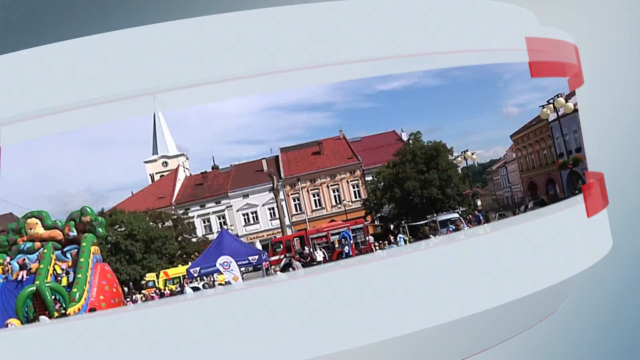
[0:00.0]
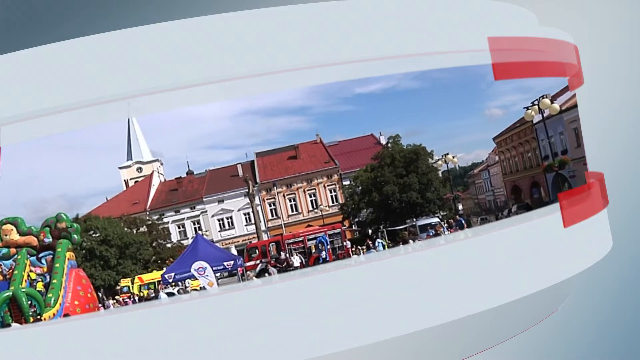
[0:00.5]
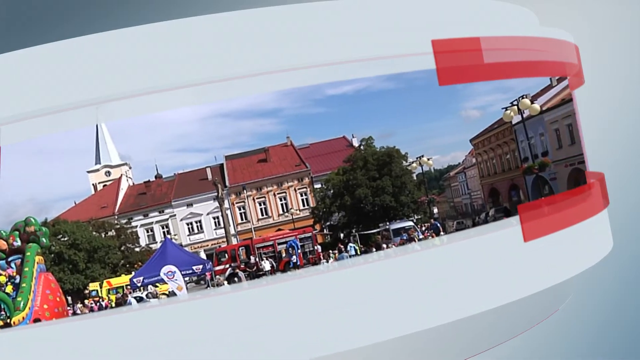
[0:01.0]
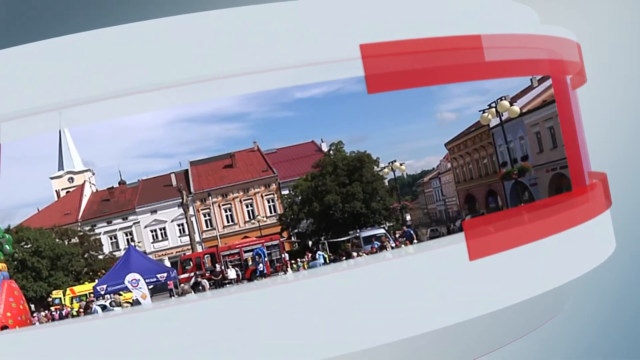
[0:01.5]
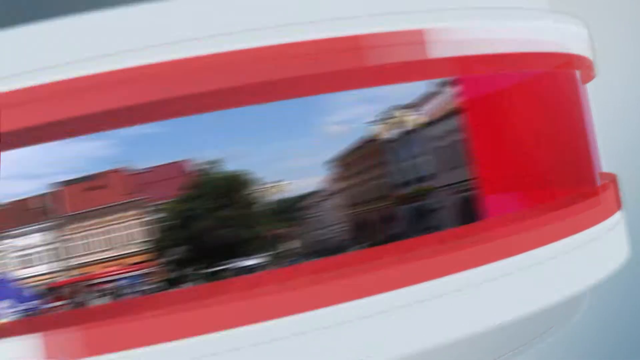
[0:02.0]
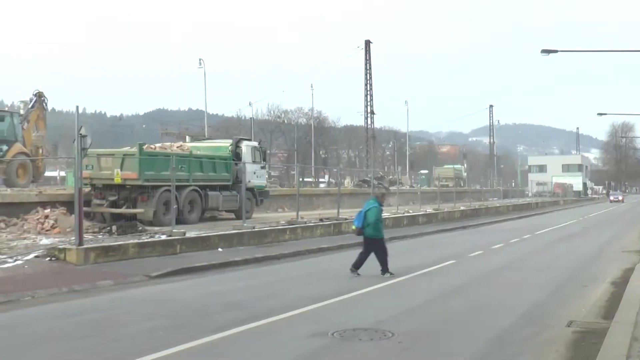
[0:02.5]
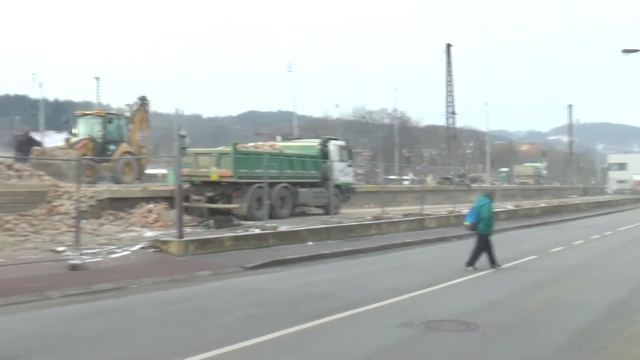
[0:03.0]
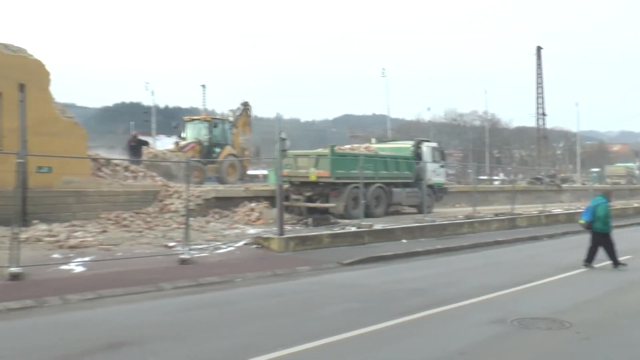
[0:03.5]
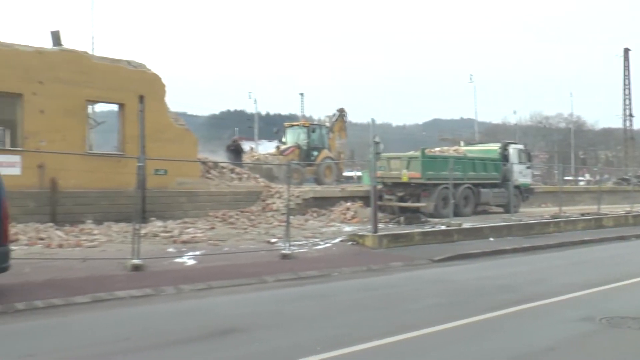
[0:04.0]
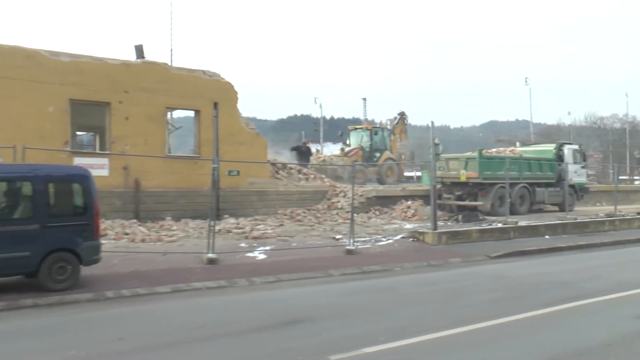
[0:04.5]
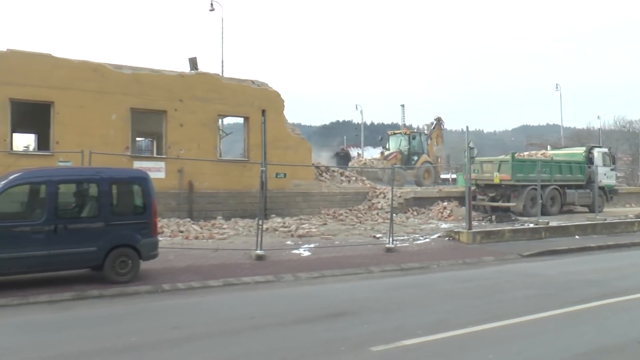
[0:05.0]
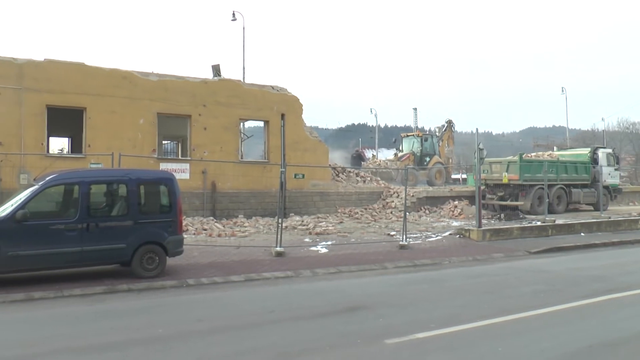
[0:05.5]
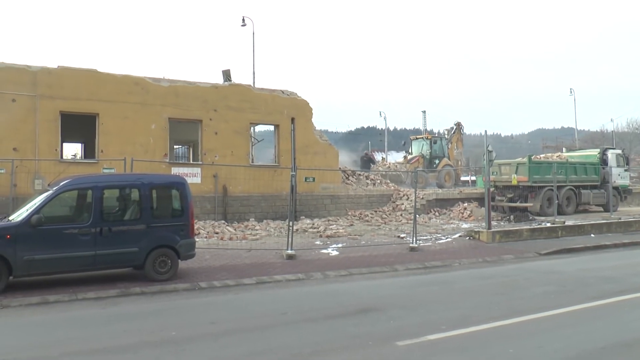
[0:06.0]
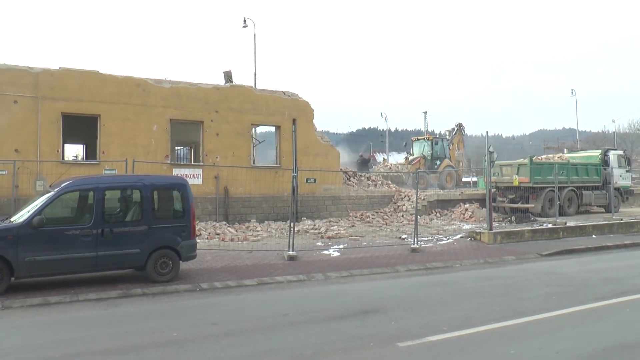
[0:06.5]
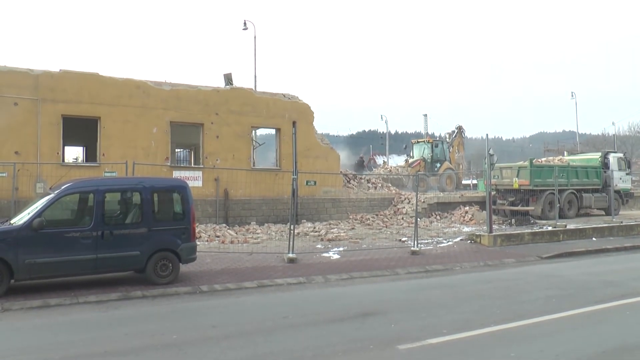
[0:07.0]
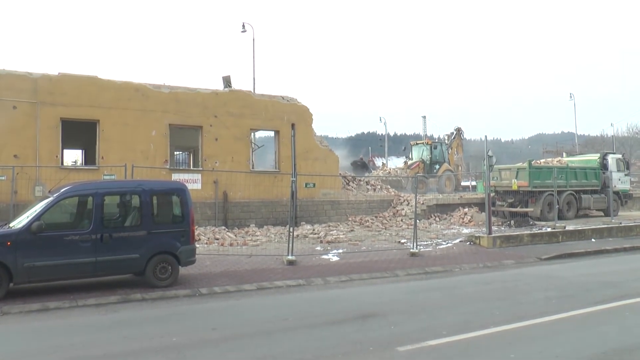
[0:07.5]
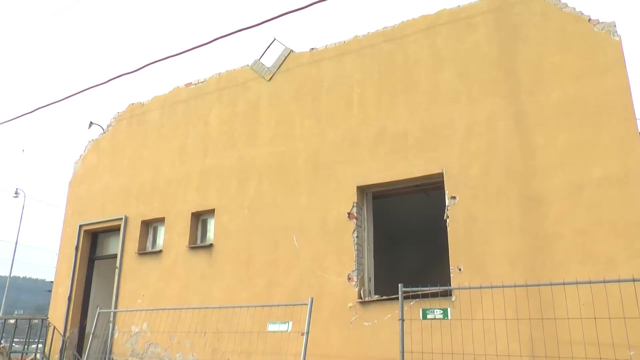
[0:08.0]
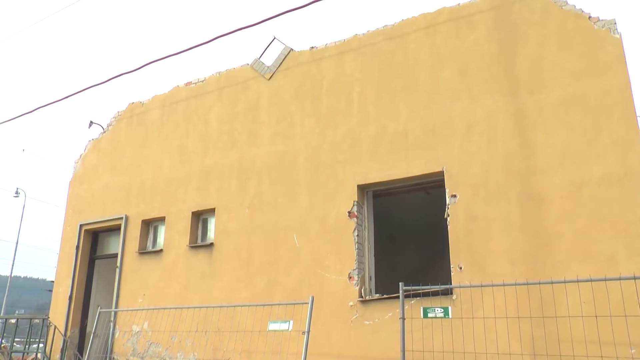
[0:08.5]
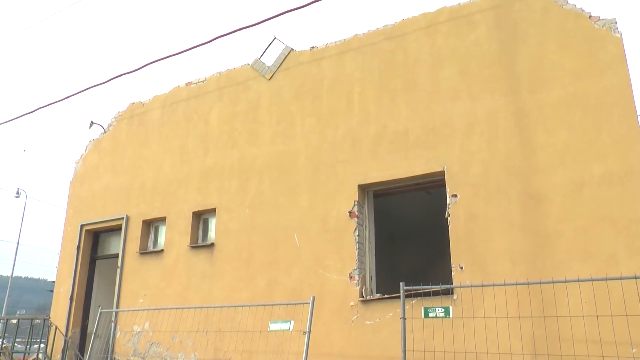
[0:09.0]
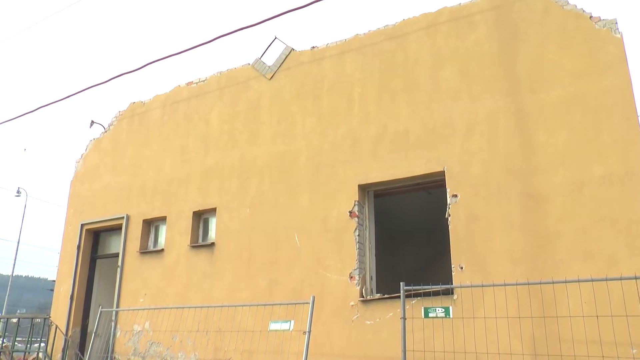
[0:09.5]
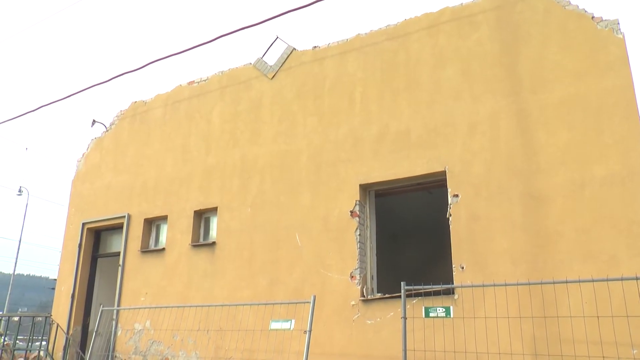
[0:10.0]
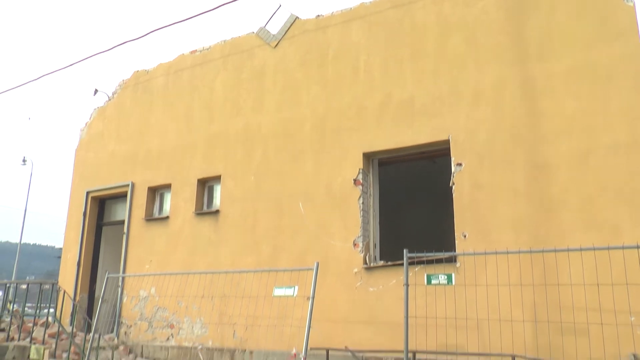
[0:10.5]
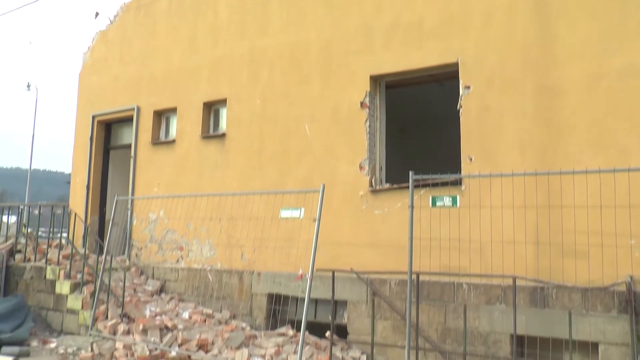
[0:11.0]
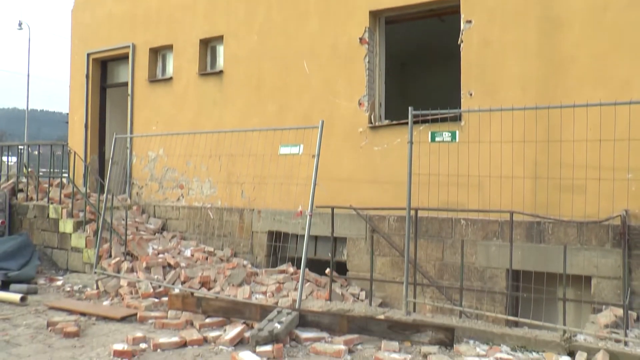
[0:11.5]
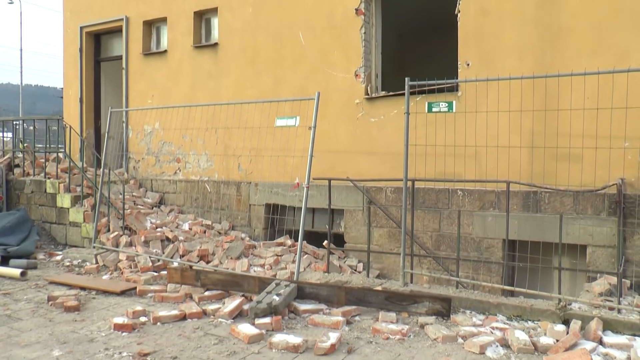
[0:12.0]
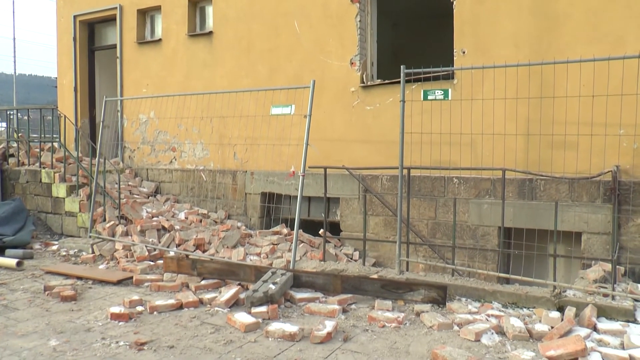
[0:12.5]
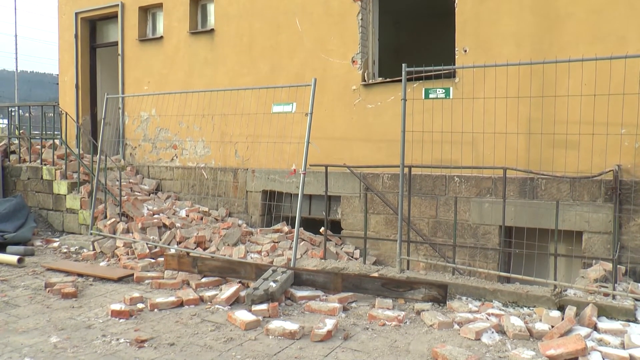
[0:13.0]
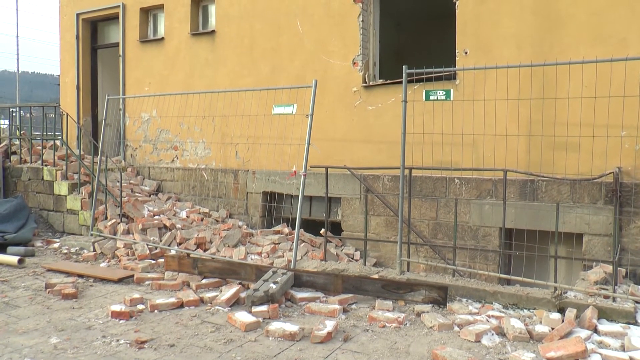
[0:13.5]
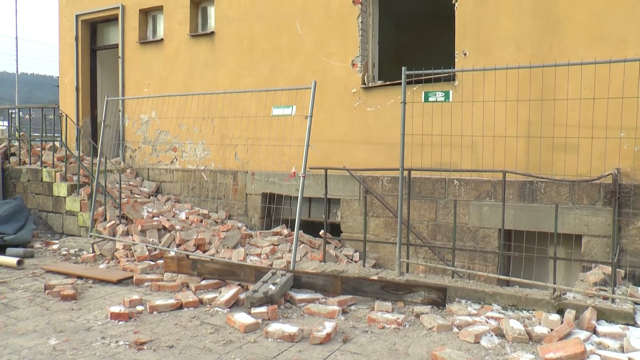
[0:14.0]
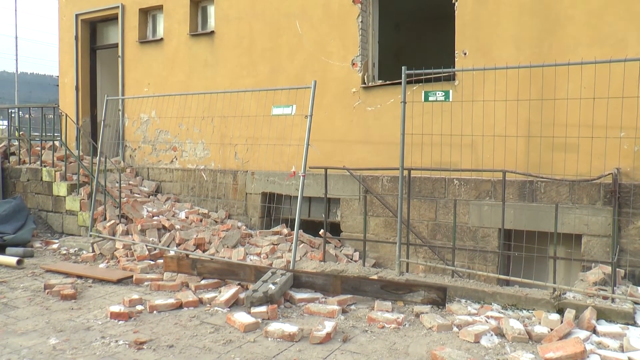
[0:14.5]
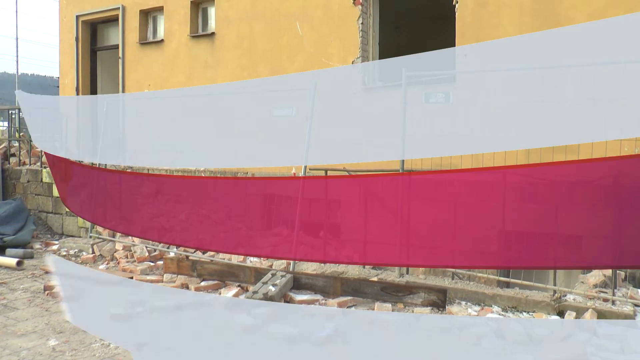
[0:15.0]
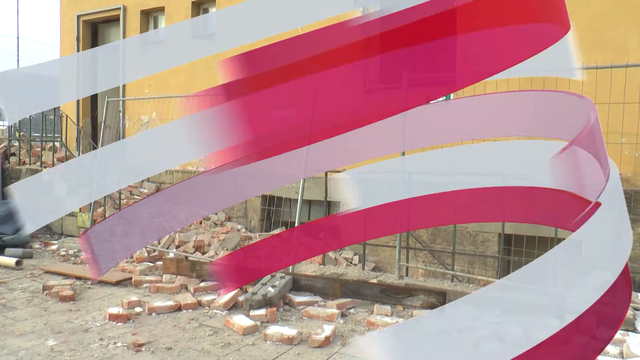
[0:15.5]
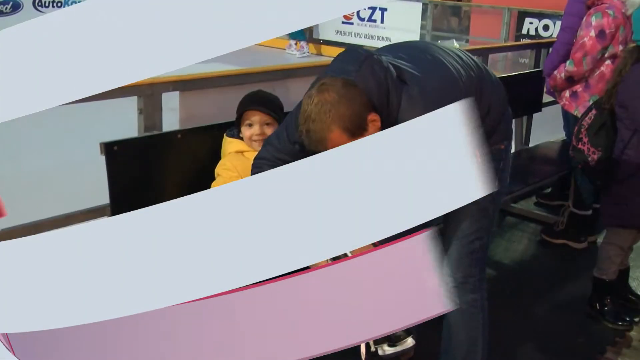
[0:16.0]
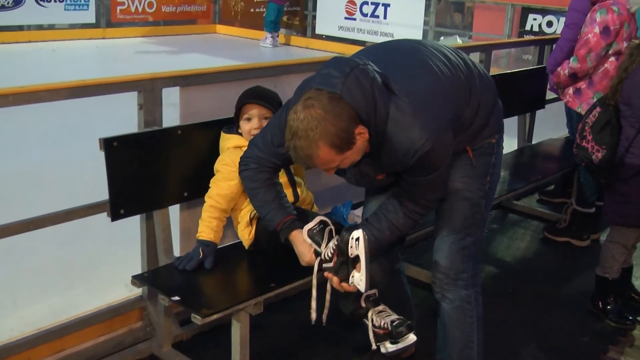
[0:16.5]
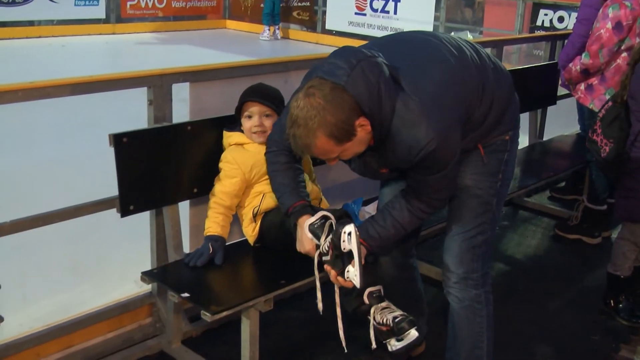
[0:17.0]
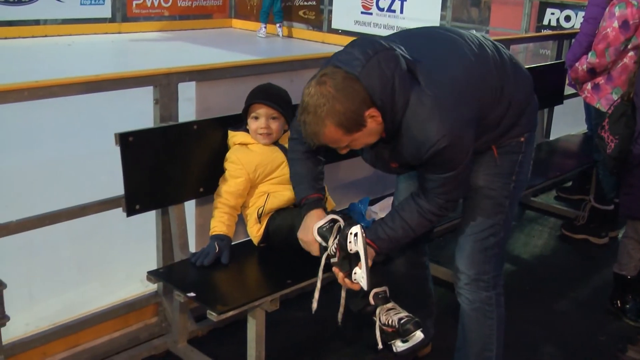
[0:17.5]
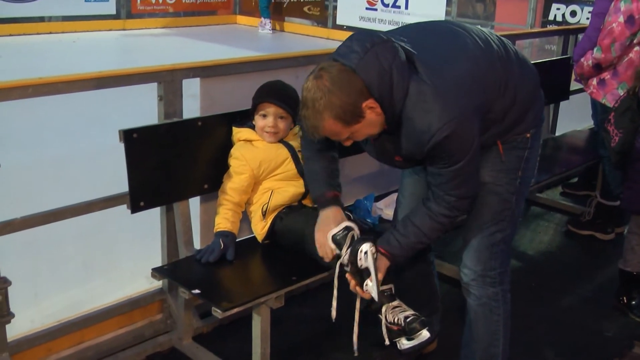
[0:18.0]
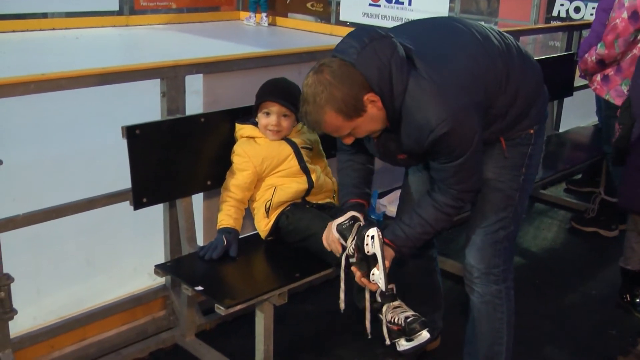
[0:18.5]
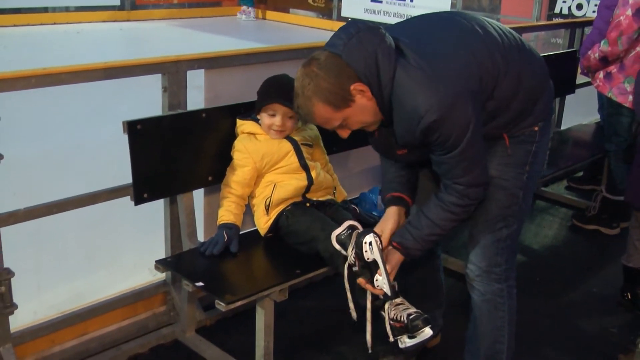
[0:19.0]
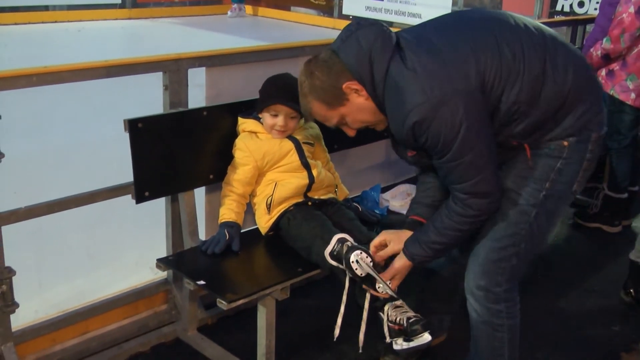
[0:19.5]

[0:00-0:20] The video starts out in what seems to be a town square. Red lines are about to go across the screen, almost like the opening of a newscast, forming a kind of red bar shape. Then a bulldozer is taking down an old building that almost looks like adobe, or at least cement on the side of a cinder block house, with a dump truck next to it for the debris. The lines go by again, as if in a wrap-up. Next, a little boy in a yellow jacket and a black hat smiles as his dad puts hockey skates on him.